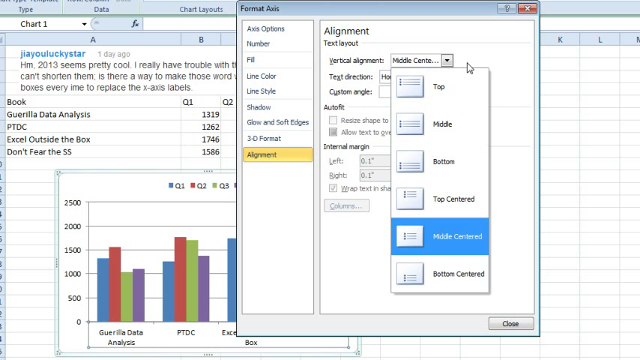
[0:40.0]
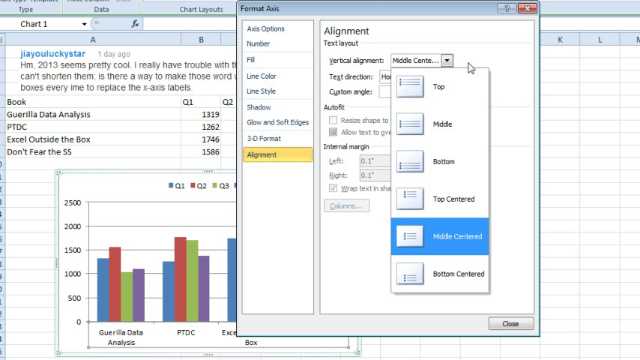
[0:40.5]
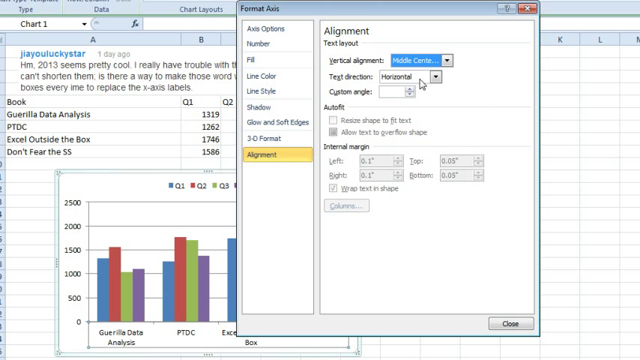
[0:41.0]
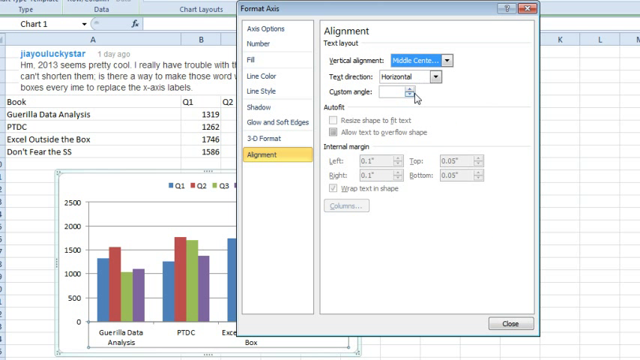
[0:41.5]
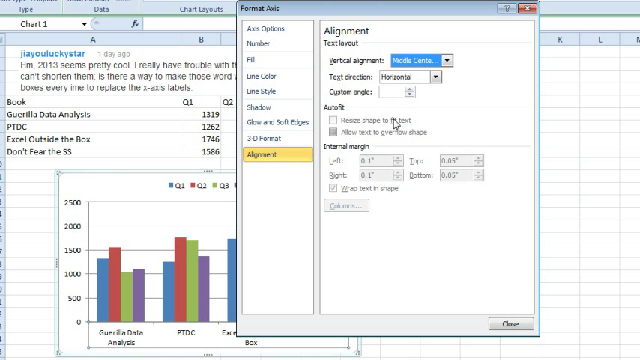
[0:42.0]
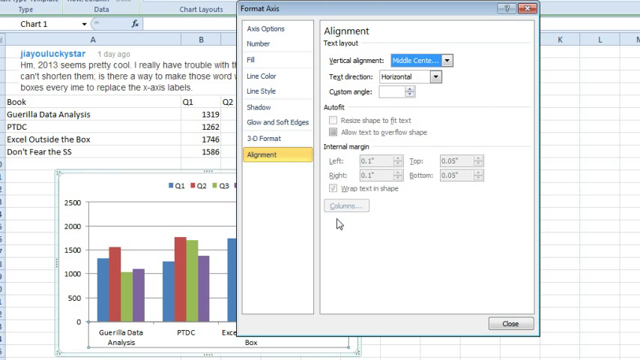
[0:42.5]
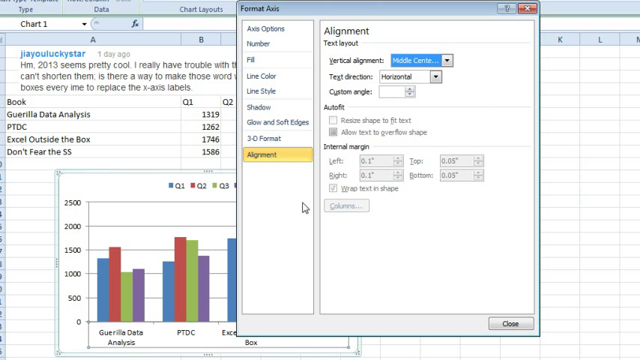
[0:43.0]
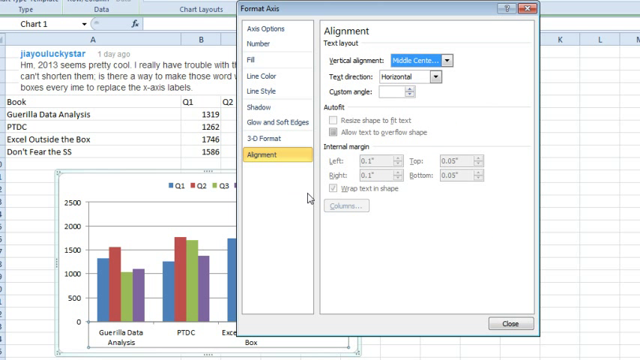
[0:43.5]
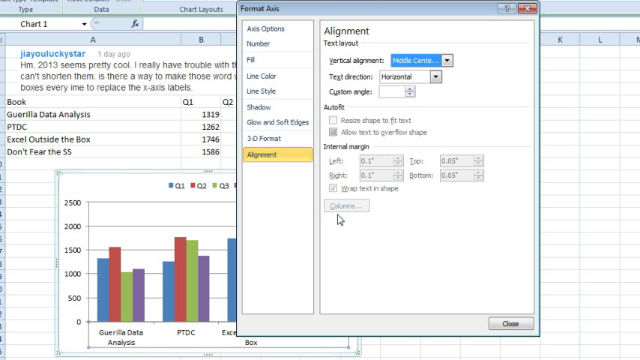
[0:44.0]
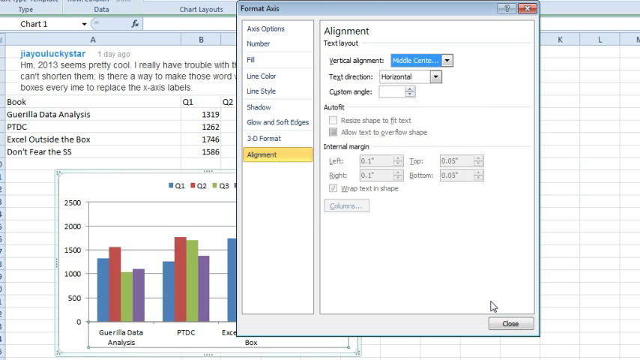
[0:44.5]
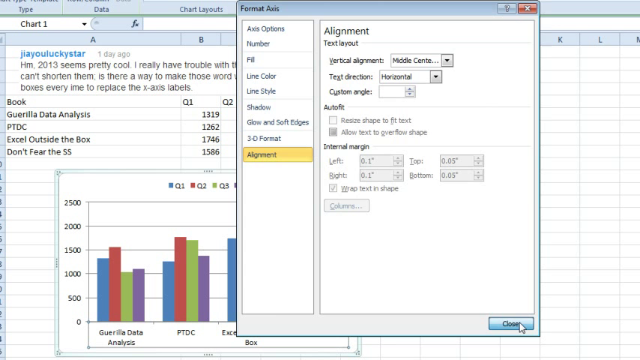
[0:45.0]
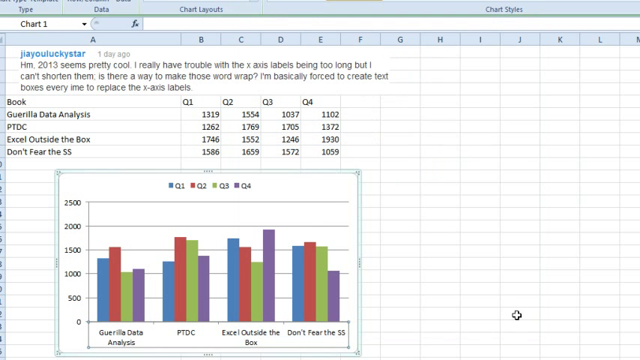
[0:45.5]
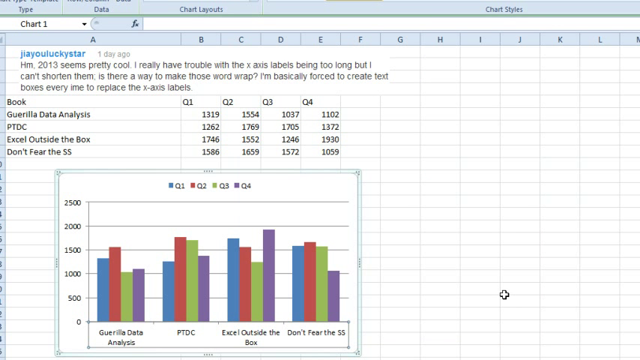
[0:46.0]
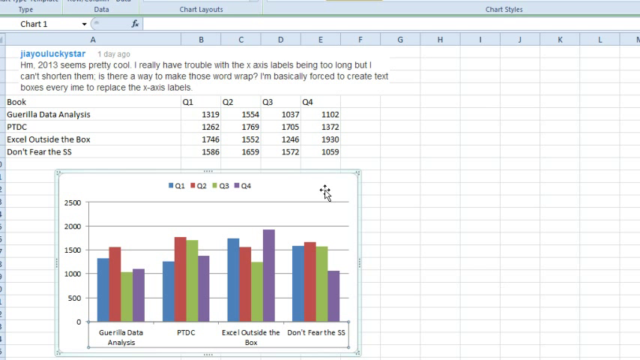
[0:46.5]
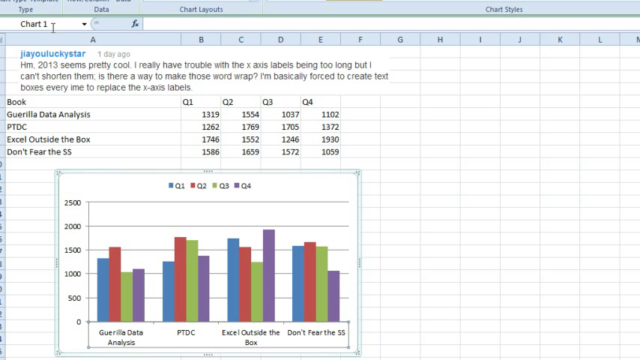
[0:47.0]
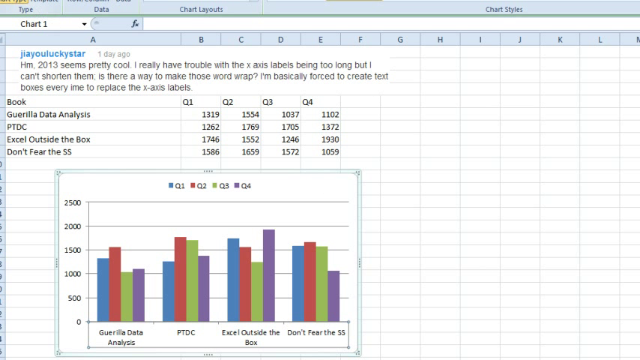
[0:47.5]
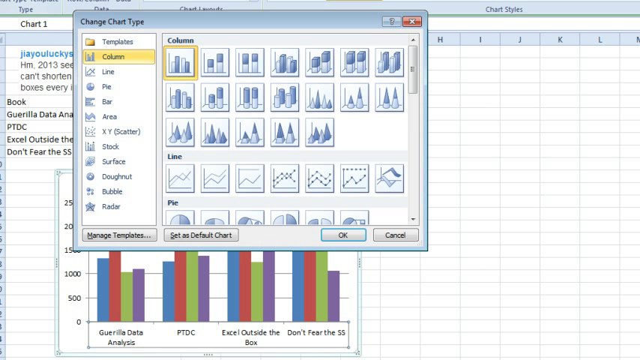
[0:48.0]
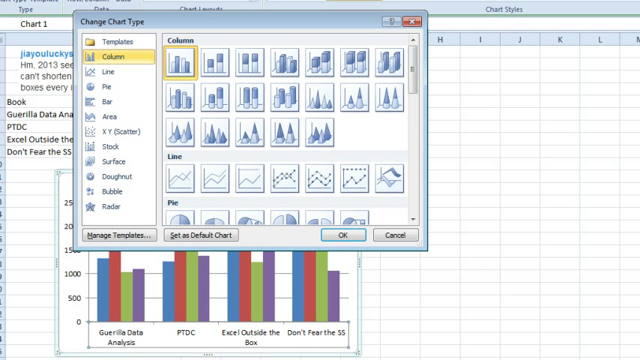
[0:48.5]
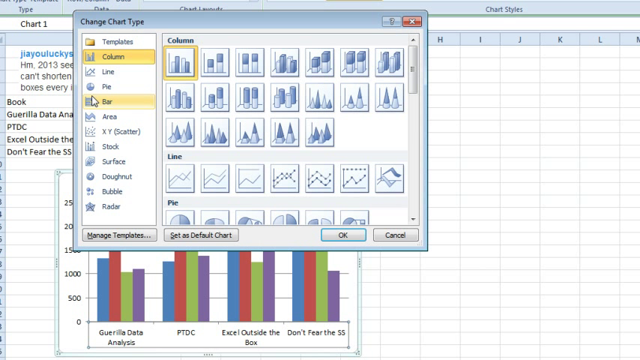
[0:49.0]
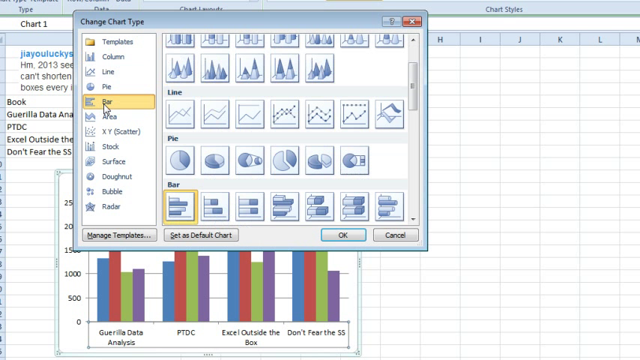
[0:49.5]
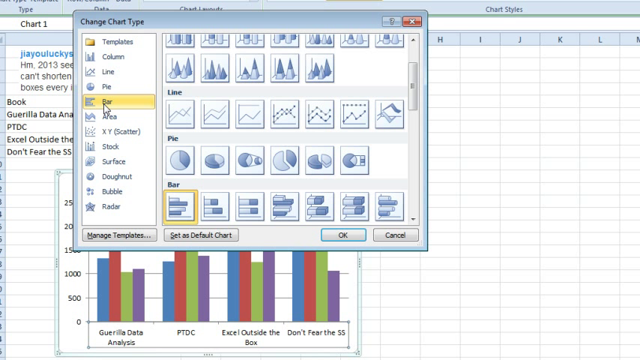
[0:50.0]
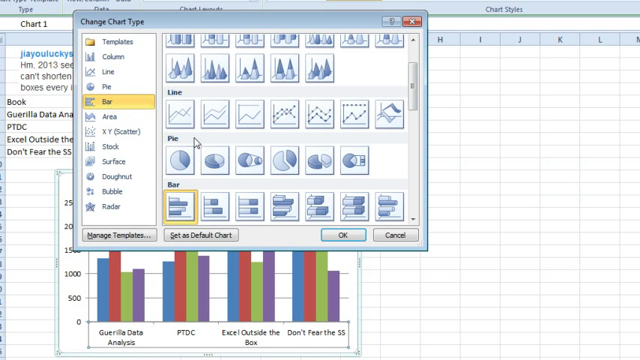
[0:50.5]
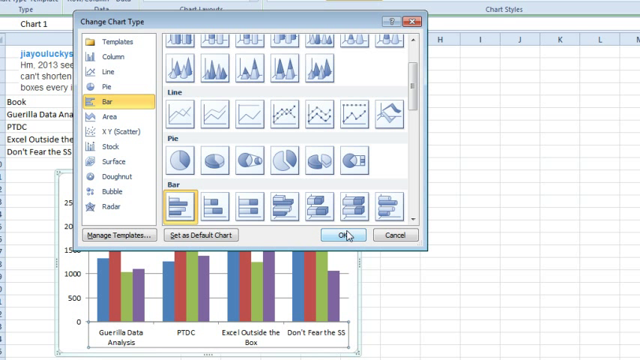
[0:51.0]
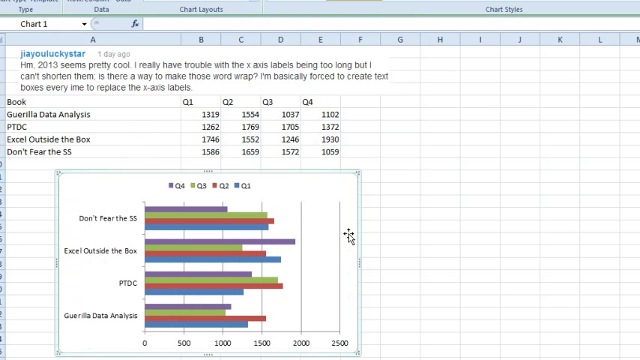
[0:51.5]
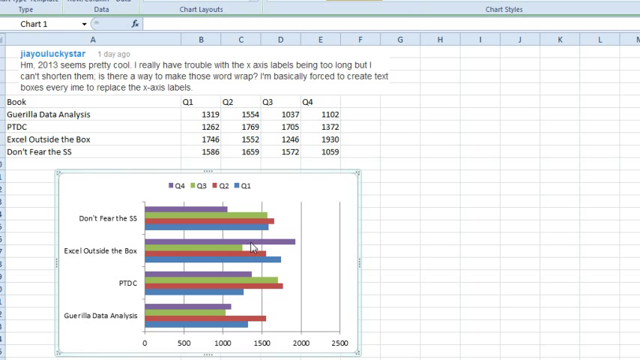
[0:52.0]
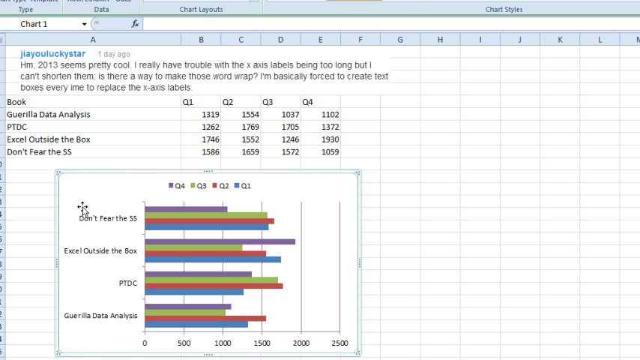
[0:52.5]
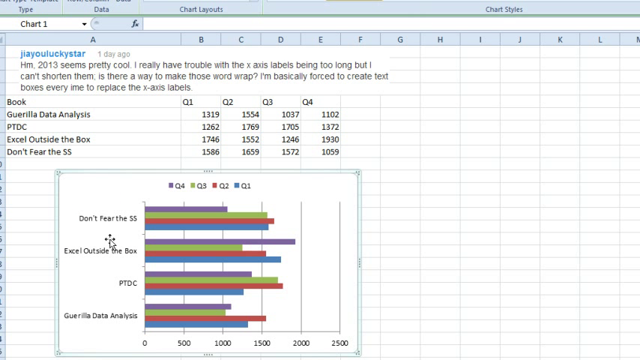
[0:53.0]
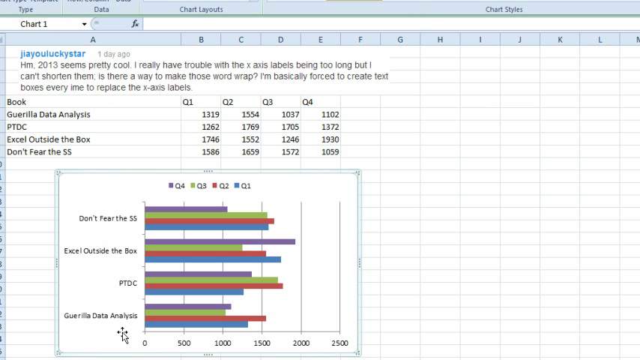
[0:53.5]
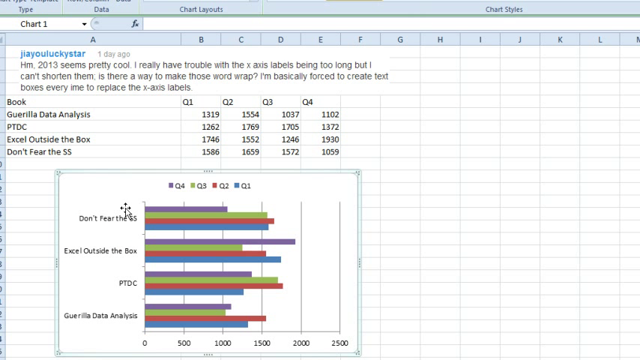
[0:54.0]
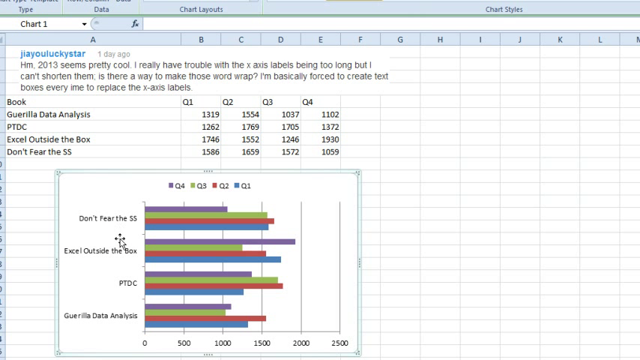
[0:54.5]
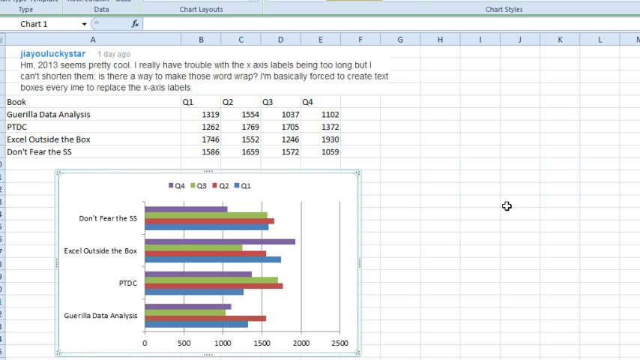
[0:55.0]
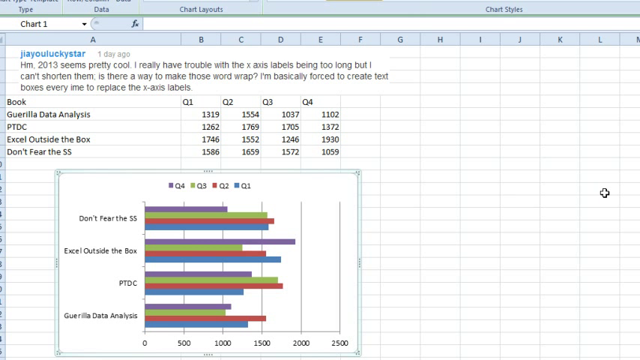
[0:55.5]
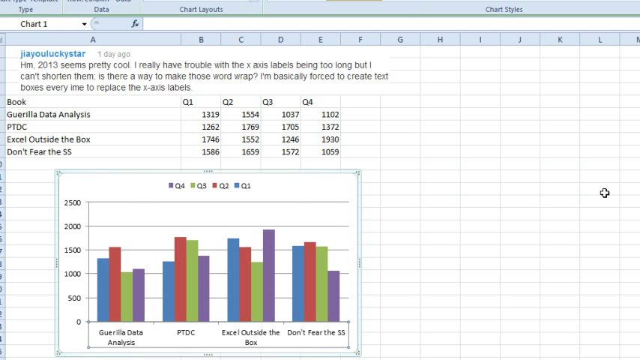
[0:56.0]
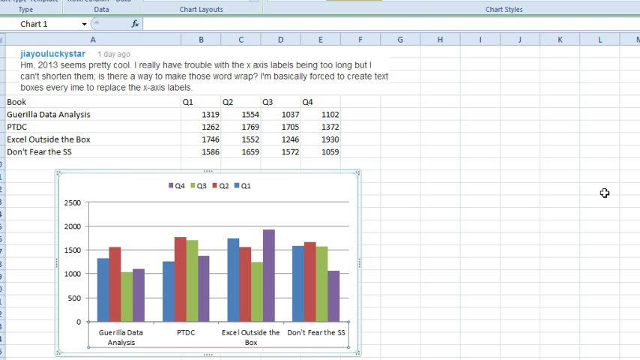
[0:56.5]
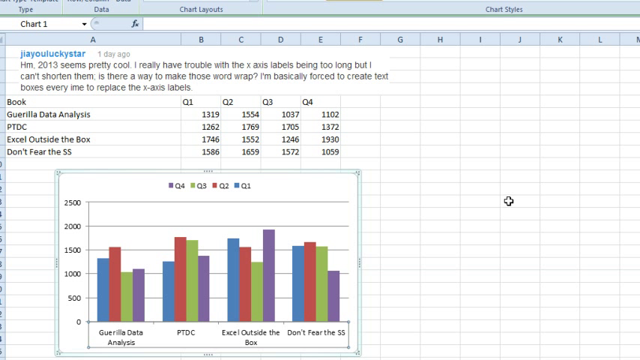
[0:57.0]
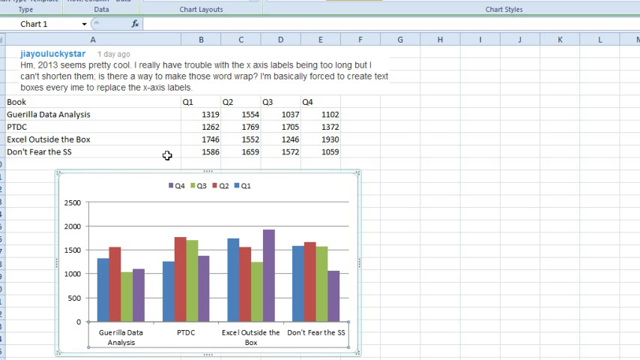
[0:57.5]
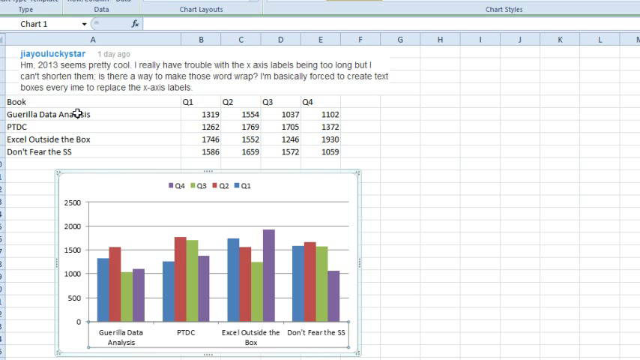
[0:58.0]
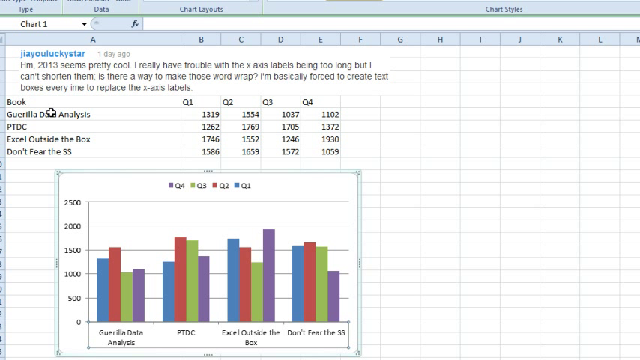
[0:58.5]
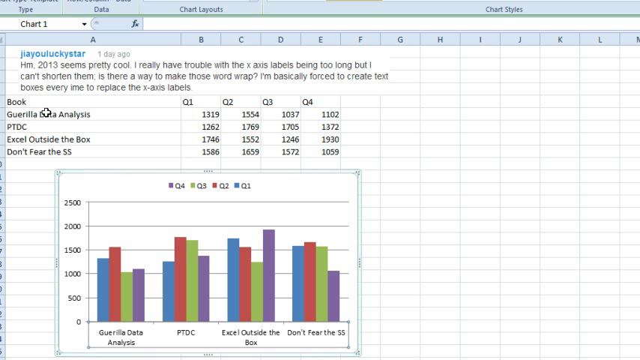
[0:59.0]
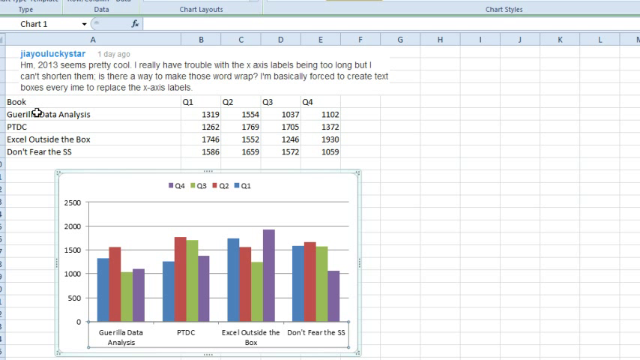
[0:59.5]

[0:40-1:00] A recording of a computer screen shows Microsoft Excel open, with columns A through E holding various information. A window titled "Format Axis" is open within the app. The user mouses to the bottom option in a row of options on the left, which reads "Alignment". Alignment has three sections: "Text Layout" at the top, then "AutoFit", and finally "Internal Margin". In Text Layout, the user has opened a drop-down menu next to an option reading "Vertical Alignment", showing the options "Top", "Middle", "Bottom", "Top-Centered", "Middle-Centered" and "Bottom-Centered", with "Middle-Centered" highlighted in blue. The user clicks the arrow, closing the drop-down and selecting Middle-Centered, then mouses down to the "Close" button in the pop-up window, saving the settings. They then click an option that is out of frame, which opens a new window reading "Change Chart Type", with multiple options listed on the left. The selected one is "Column", highlighted in yellow, and multiple graphic-only options appear on the right, with the top-left-most graphic highlighted by a yellow box. The user clicks the option on the left reading "Bar", which scrolls down through the options, leaves the default first option selected and clicks OK. This changes the bar graph displayed at the bottom of the Excel spreadsheet.